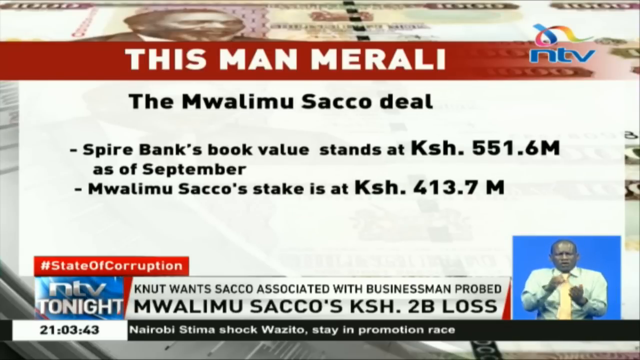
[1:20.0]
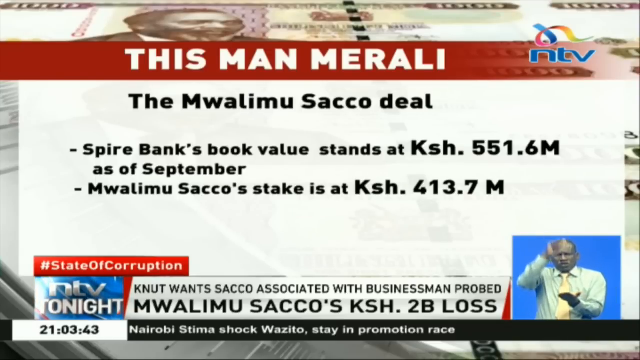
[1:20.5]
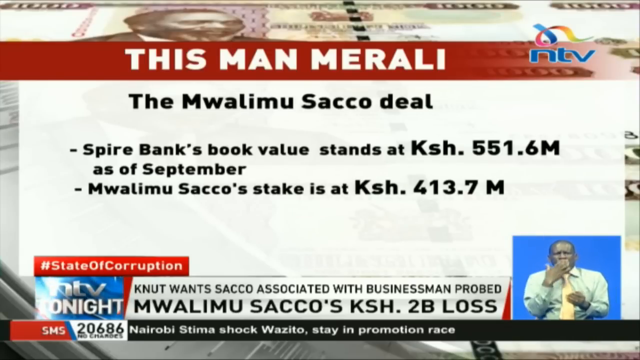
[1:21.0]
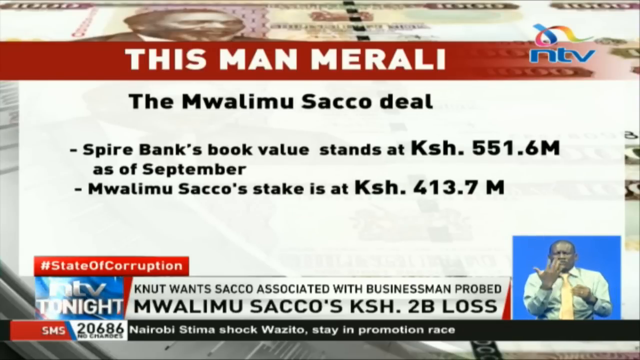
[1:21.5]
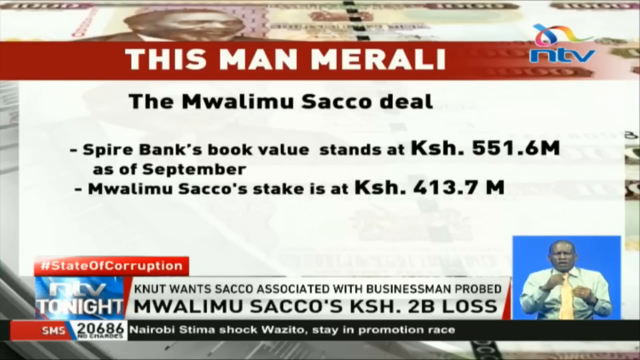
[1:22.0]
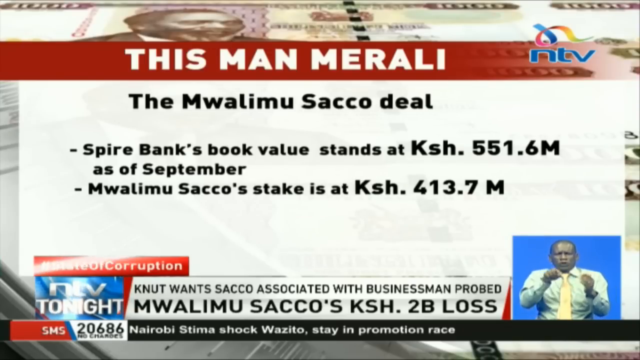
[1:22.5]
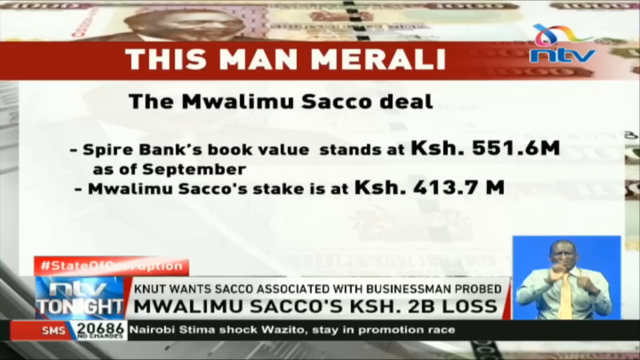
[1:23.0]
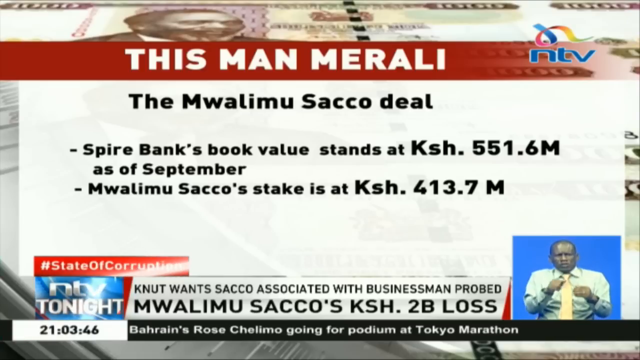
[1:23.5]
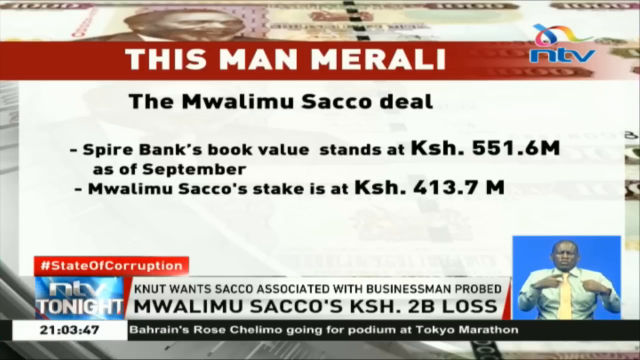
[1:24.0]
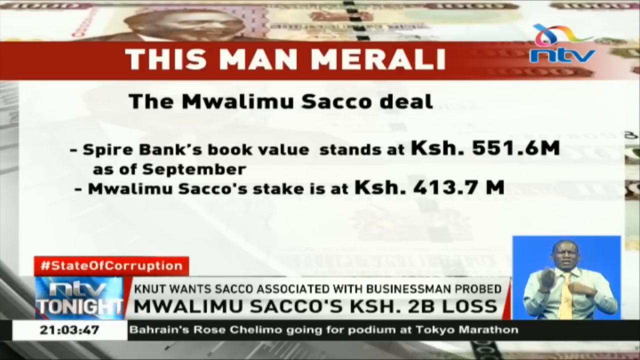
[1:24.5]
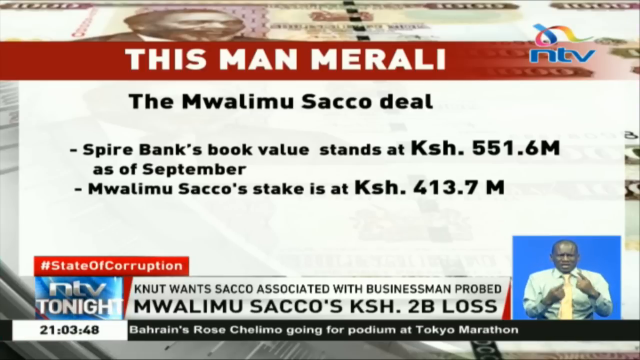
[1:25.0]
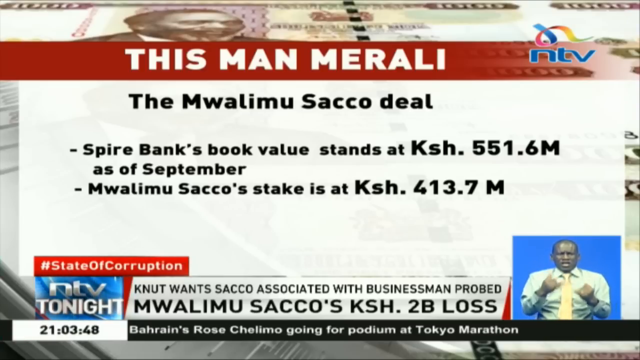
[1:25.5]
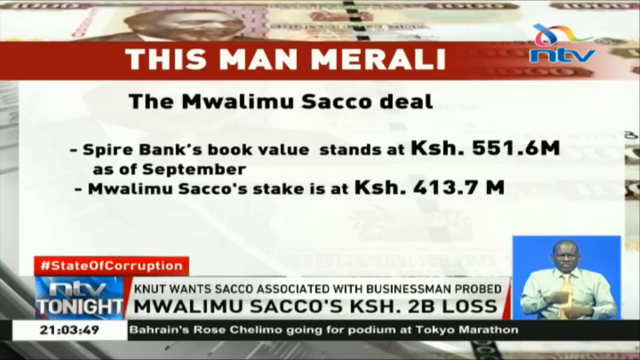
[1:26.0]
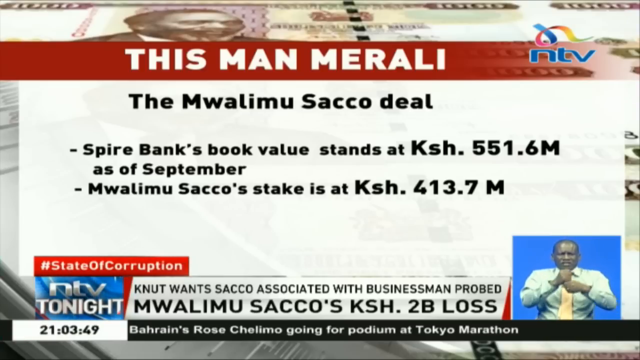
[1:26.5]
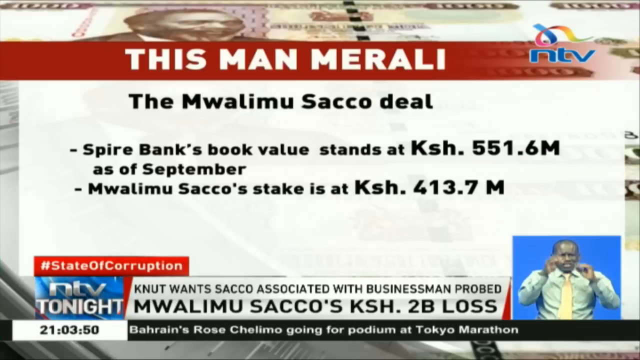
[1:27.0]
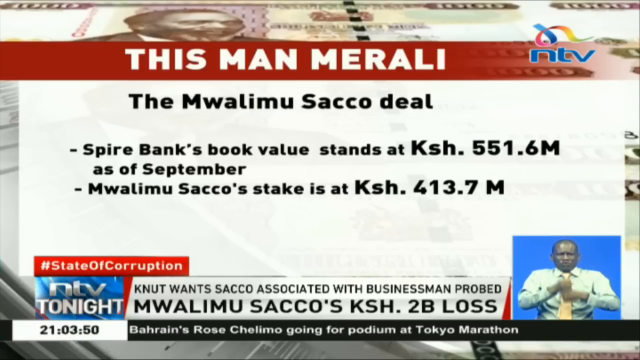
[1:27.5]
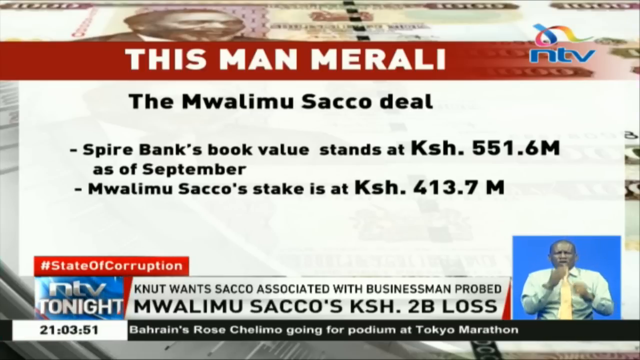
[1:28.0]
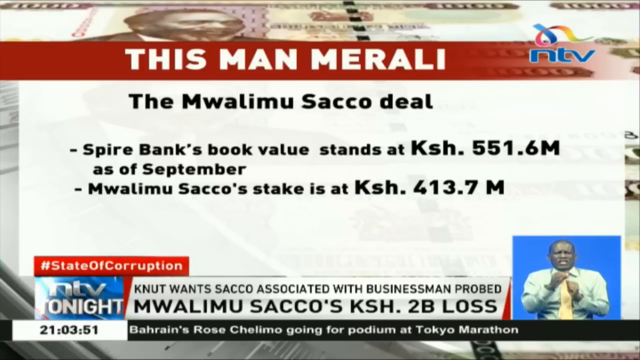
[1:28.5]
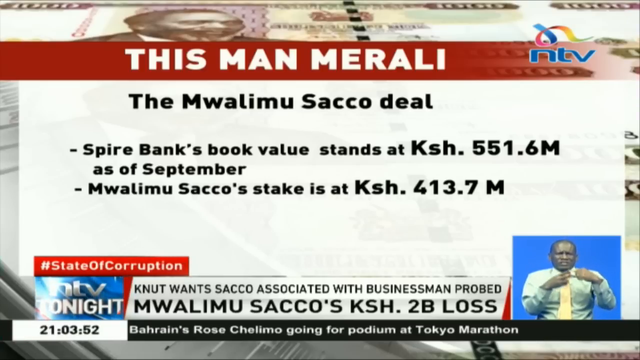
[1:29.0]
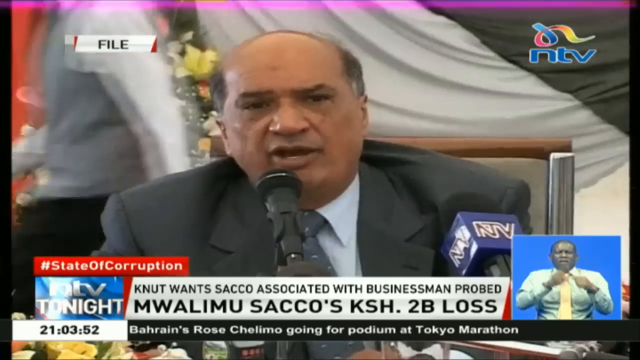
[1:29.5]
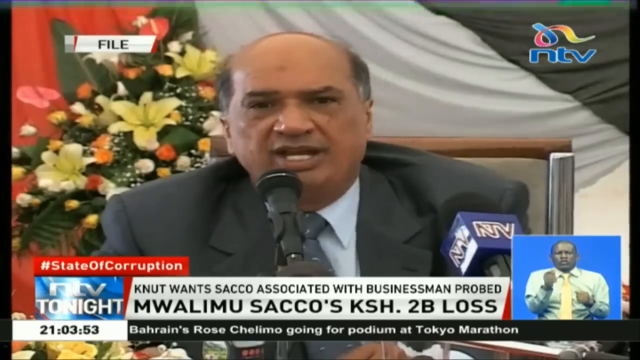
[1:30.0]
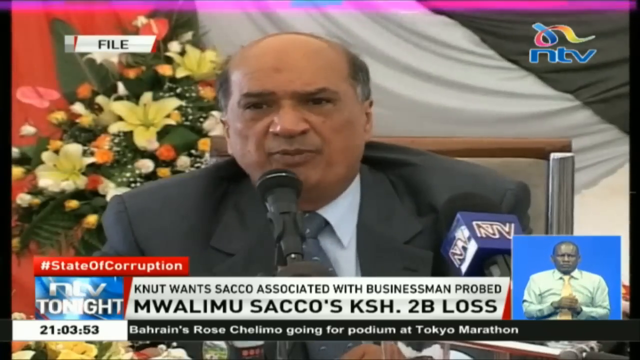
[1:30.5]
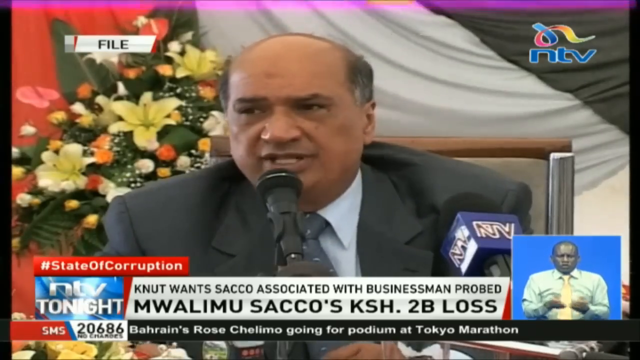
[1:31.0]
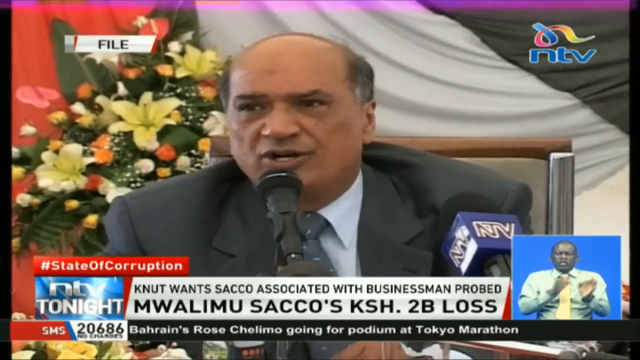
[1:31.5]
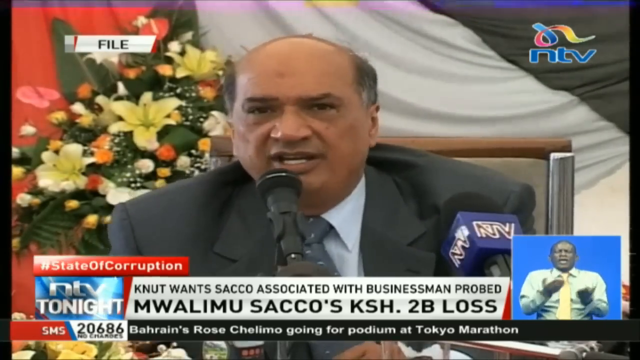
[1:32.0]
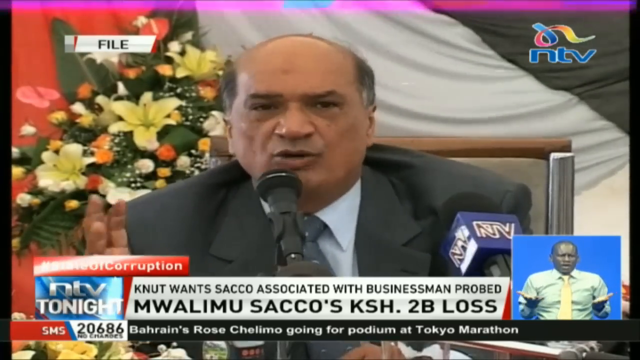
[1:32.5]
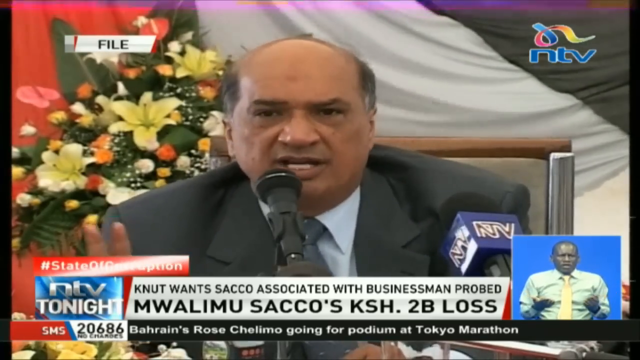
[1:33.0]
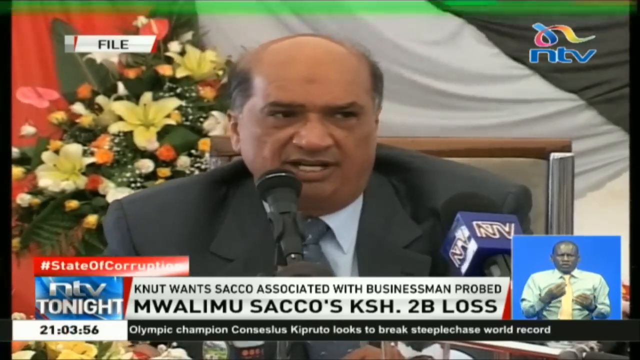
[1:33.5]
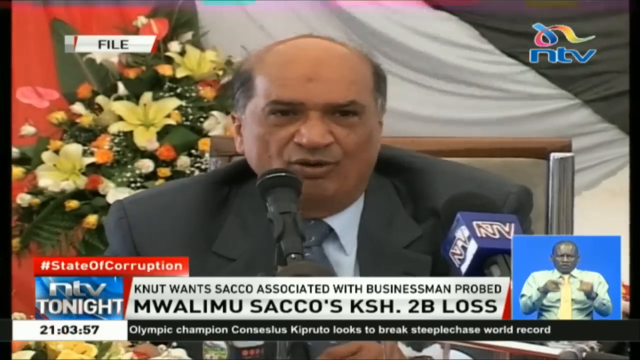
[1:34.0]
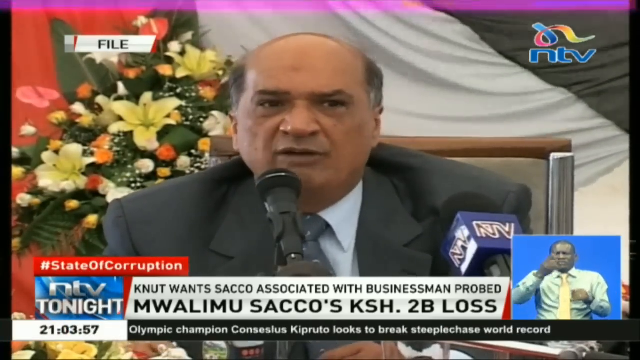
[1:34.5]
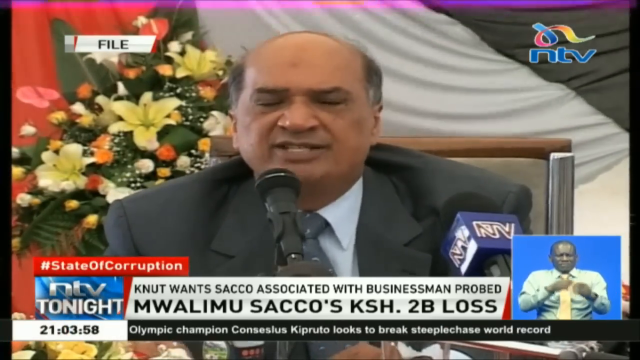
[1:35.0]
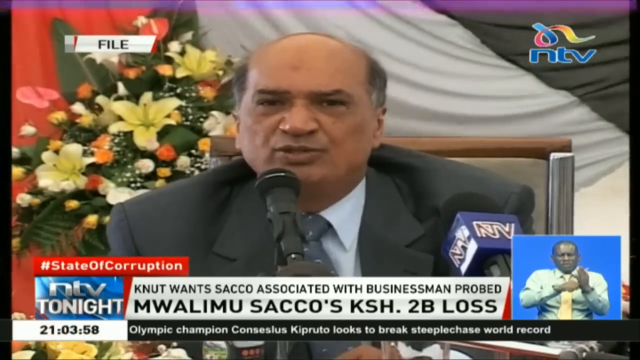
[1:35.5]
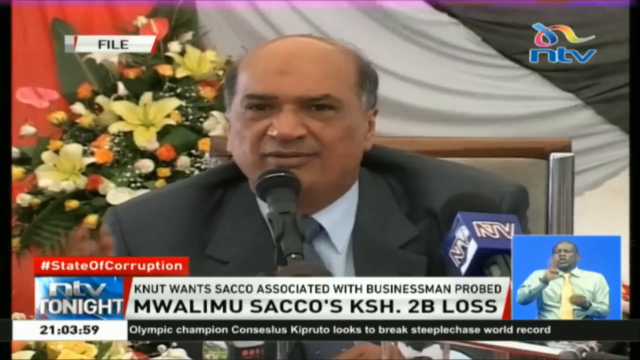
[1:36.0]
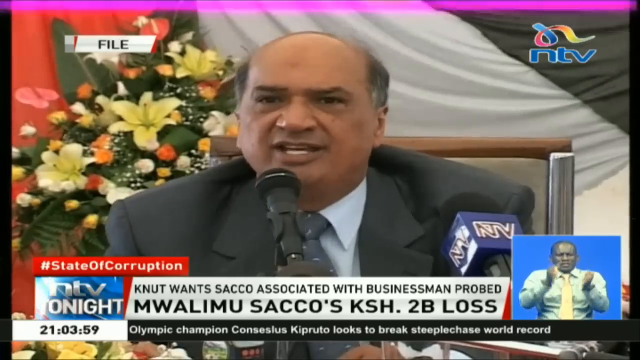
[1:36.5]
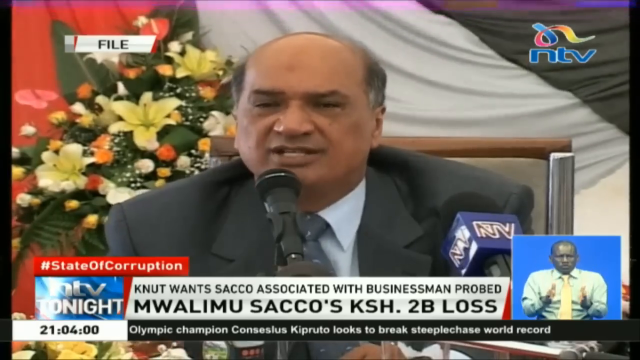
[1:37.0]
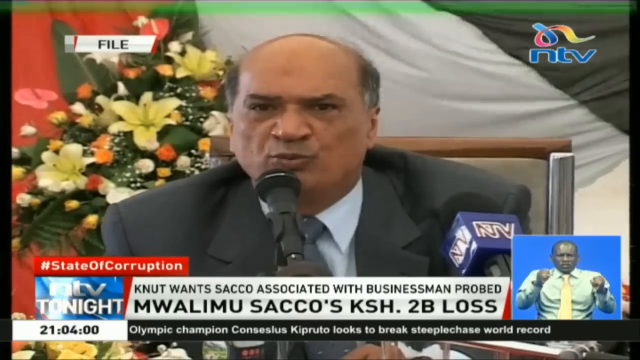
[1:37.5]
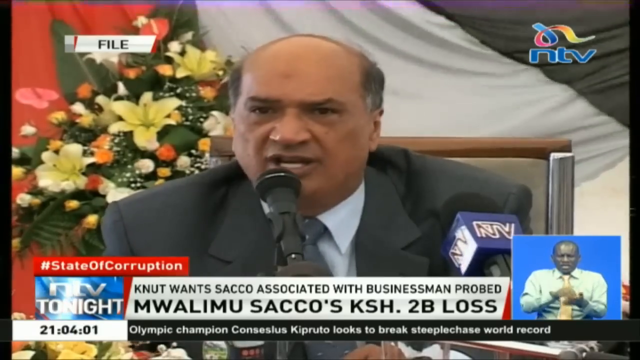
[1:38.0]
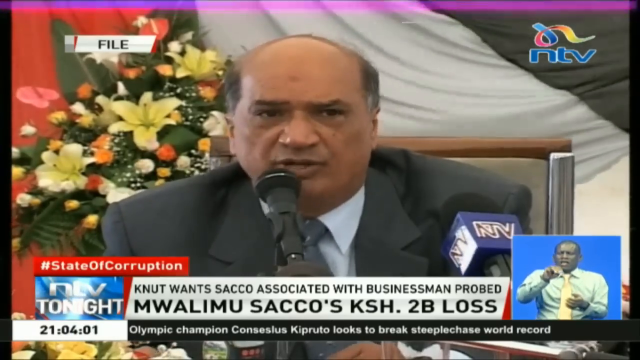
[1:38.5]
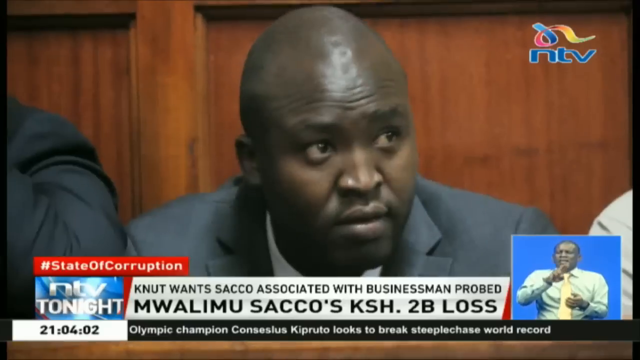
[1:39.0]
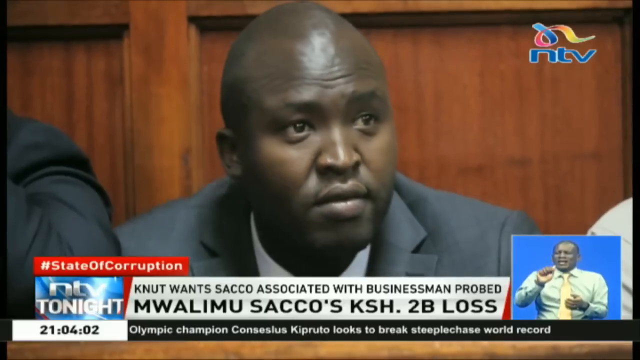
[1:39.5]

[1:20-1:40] The NTV broadcast continues, with the blue NTV emblem and a curling ribbon above it in the upper right corner. The main headline reads "this man, MERALI". Beneath it, in black letters, is "V WMALIMU SACO deal". Below that is "Spire Bank's book value stands at KSH 551.6 million as of September", then "MWALIMU SACO stake is at KSH 413.7 million". Underneath are "State of Corruption" and "NTV Tonight", with the headline "KNUT wants SACO associated with businessmen probed". In the lower right corner of the screen, a person signs against a blue background: an African man in his 50s wearing a white shirt and yellow tie.